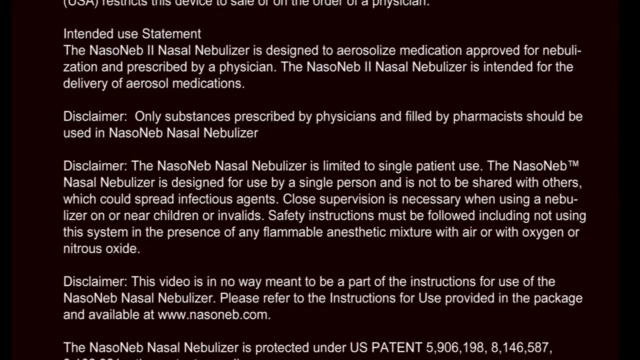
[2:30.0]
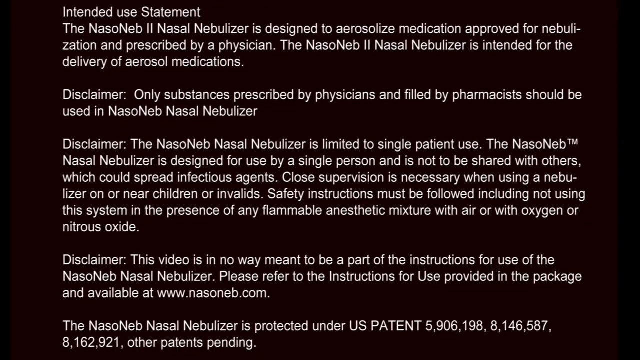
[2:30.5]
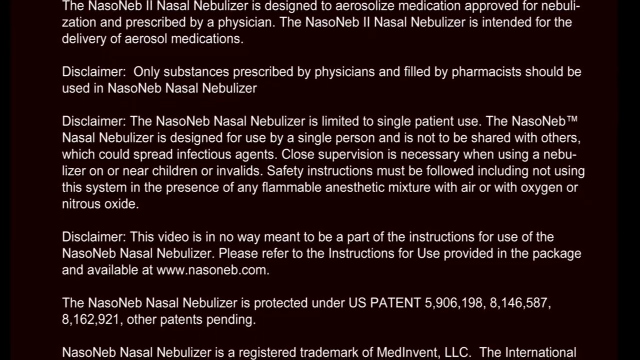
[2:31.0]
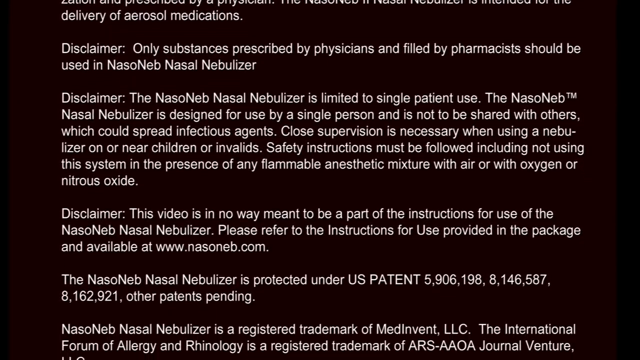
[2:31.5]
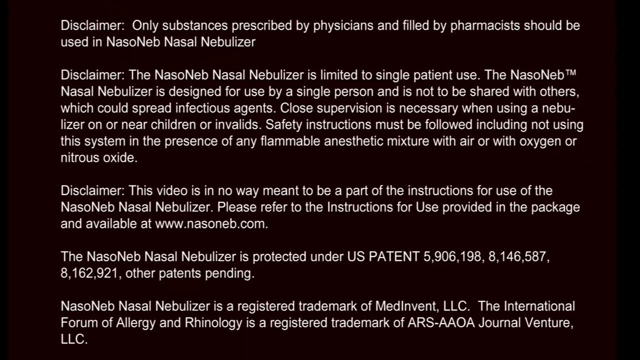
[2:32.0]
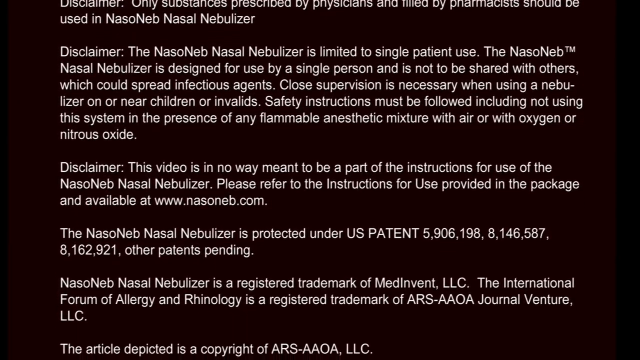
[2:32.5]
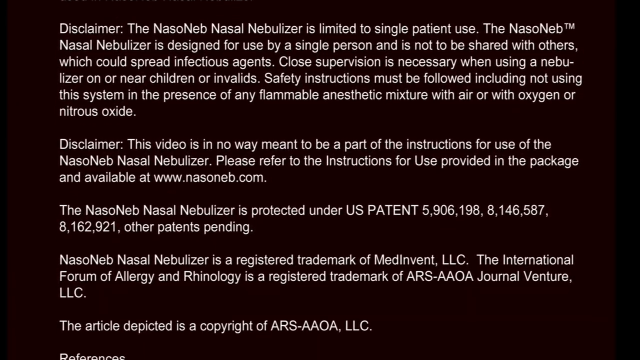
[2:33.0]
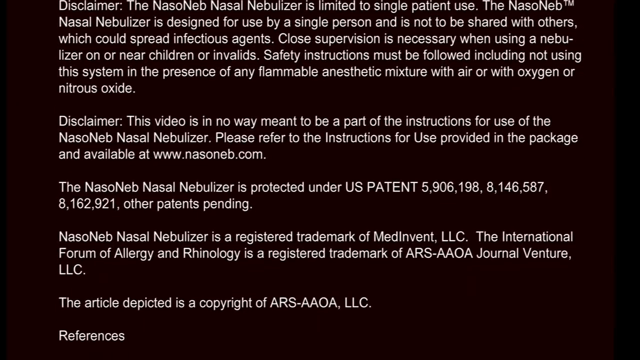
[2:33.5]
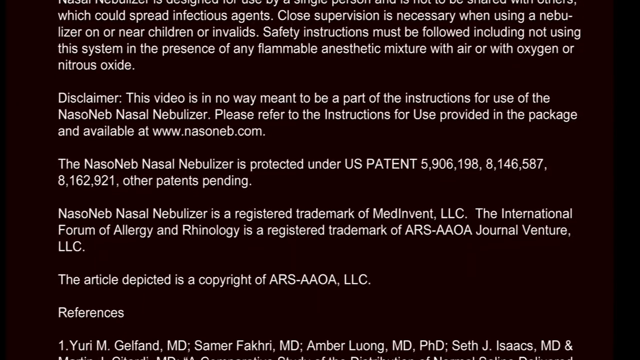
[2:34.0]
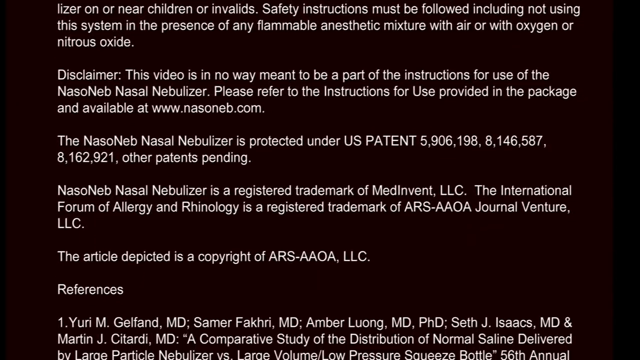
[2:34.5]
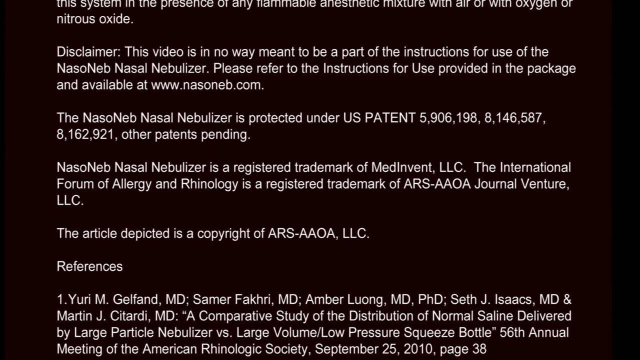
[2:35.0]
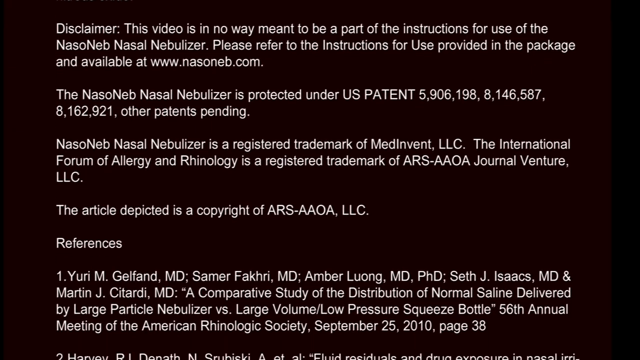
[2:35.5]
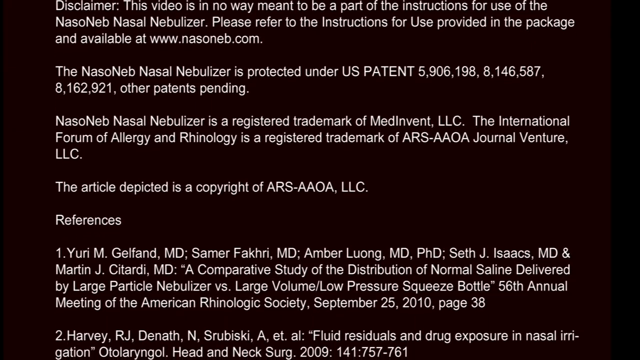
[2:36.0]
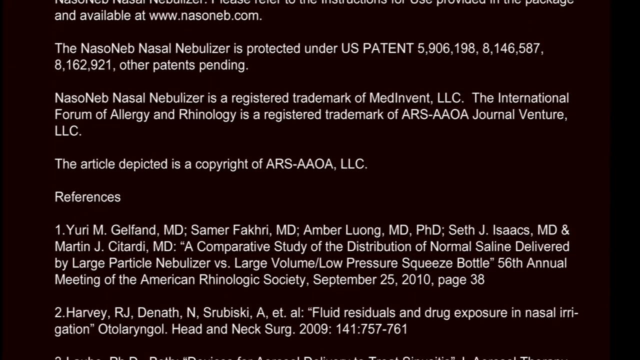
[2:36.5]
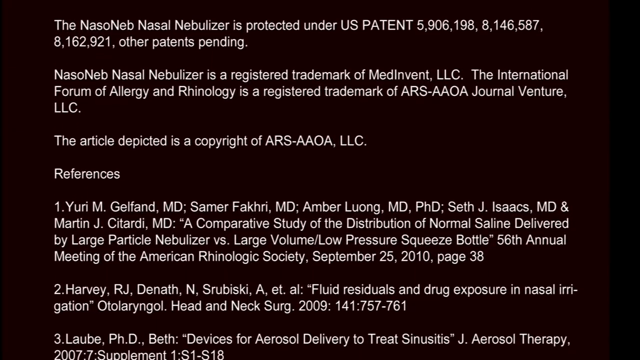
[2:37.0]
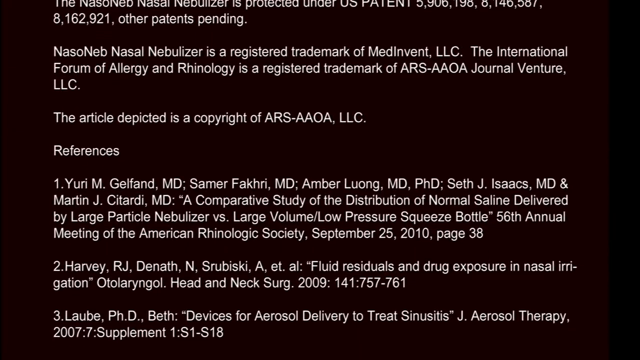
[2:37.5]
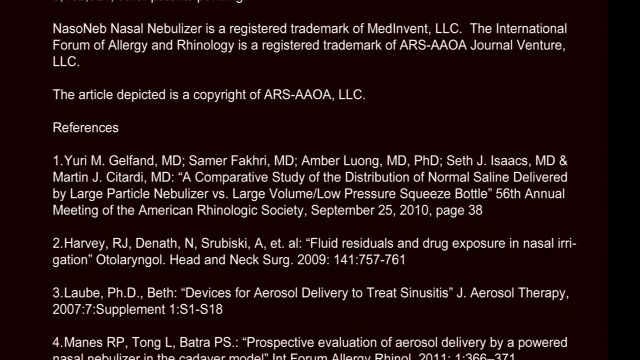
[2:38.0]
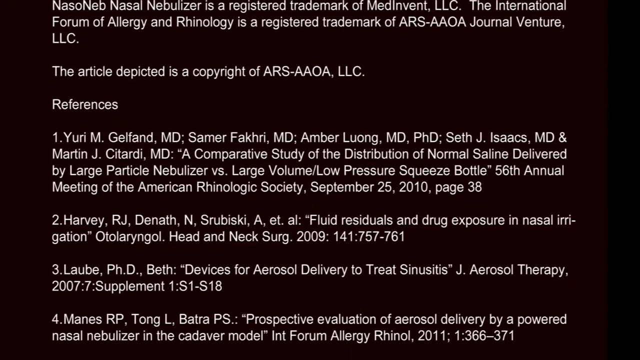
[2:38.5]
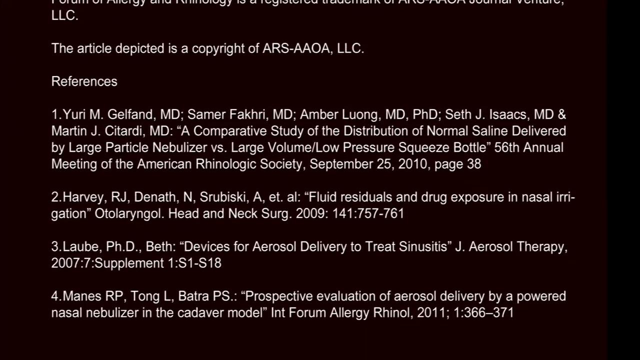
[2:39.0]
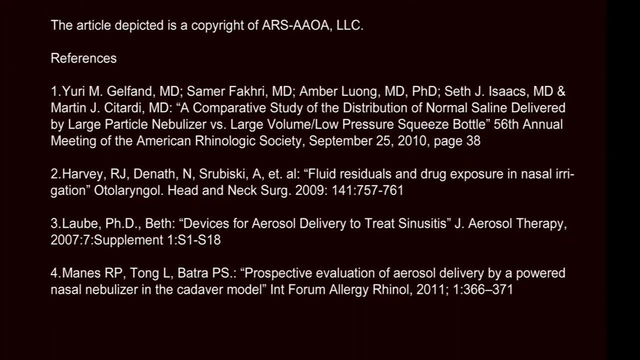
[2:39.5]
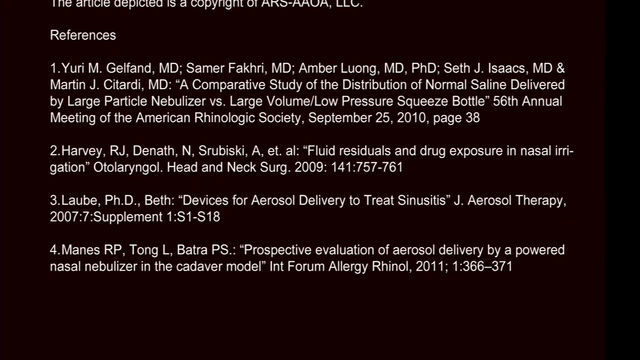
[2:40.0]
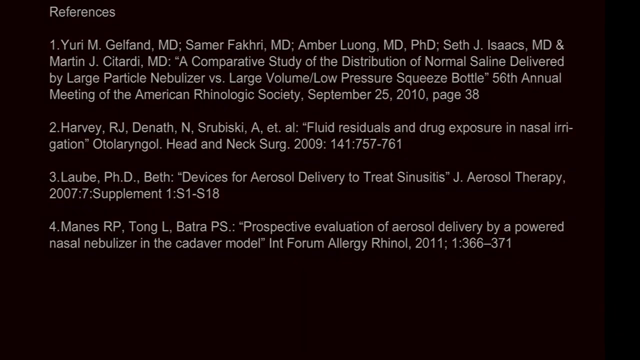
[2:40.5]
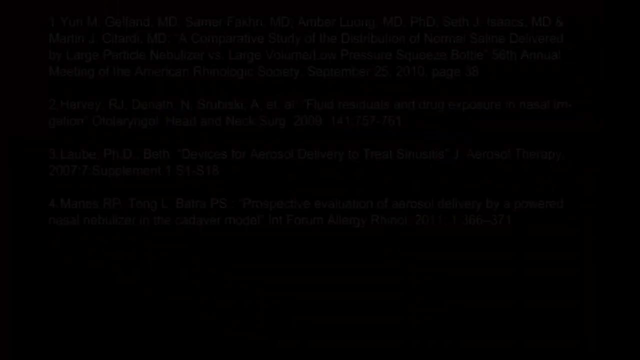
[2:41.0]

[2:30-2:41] A disclaimer reads: "Disclaimer, only substance prescribed by physician and filled by pharmacist should be used in nasal nebulizer. Disclaimer, the nasal nebulizer is limited to single patient use. The nasal nebulizer is designed for use by single person and is not to be shared with others. Which could spread infectious agent. Close supervision is necessary when using a nebulizer on or near children or invalids. Safety instructions must be followed including not using this system in the presence of any flammable anaesthetic mixture with air or with oxygen or nitrous oxide." A second disclaimer reads: "This video is in no way meant to be a part of the instruction for use of the NasoNeb Nasal Nebulizer. Please refer to the instruction for use provided in the package and available at www.nasoneb.com".